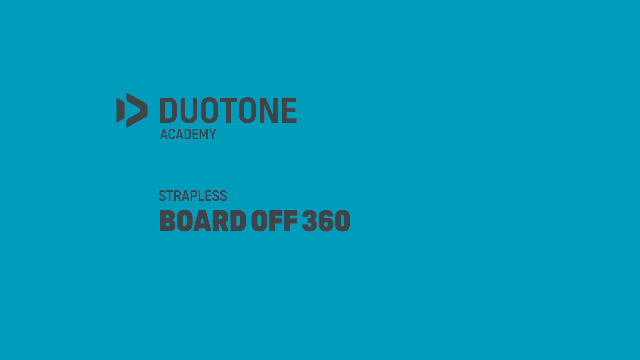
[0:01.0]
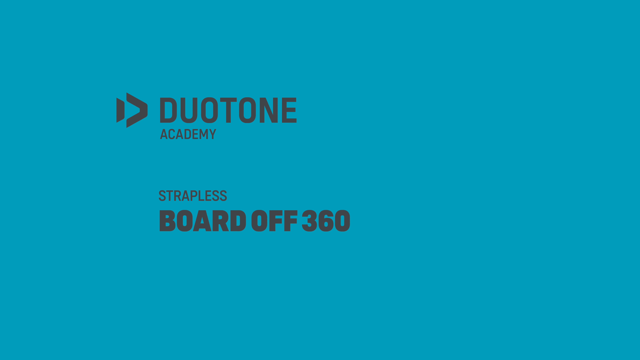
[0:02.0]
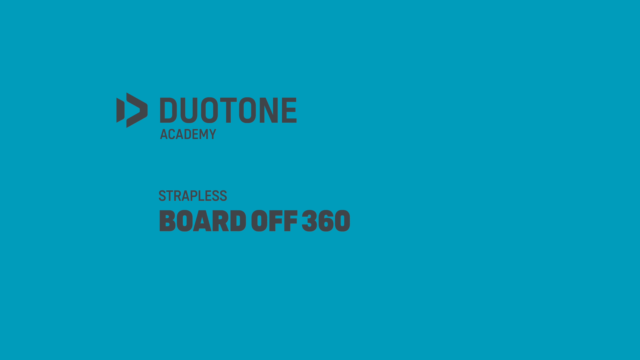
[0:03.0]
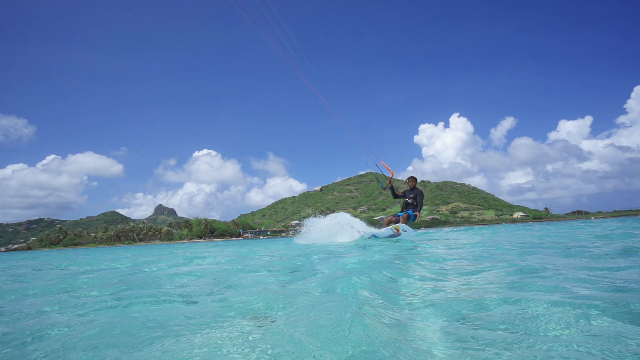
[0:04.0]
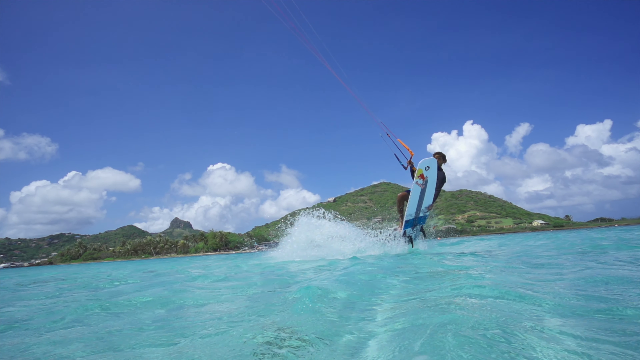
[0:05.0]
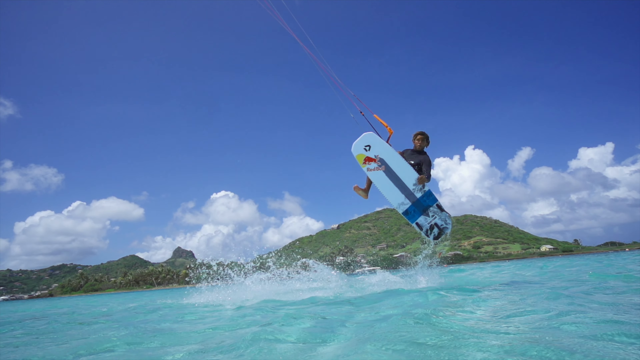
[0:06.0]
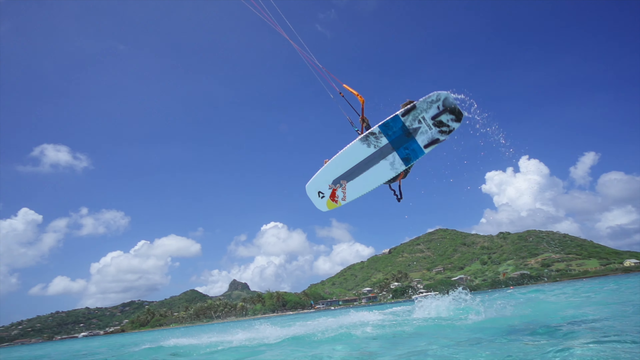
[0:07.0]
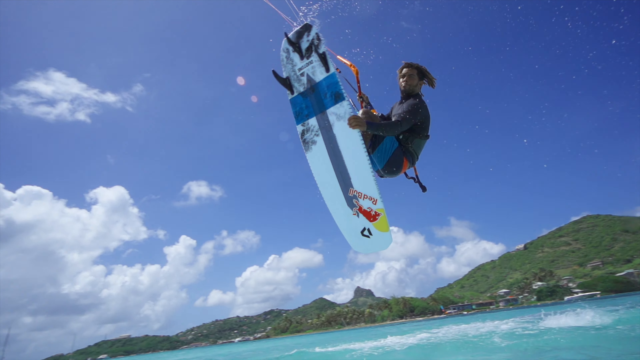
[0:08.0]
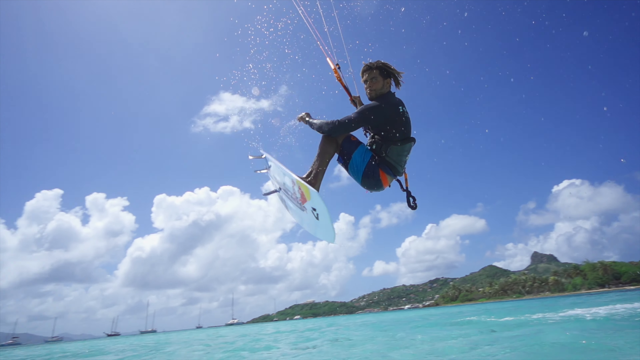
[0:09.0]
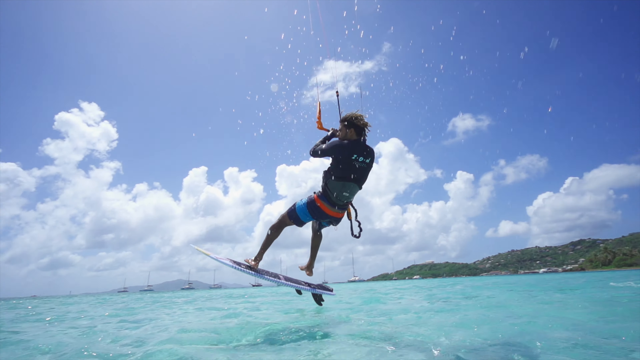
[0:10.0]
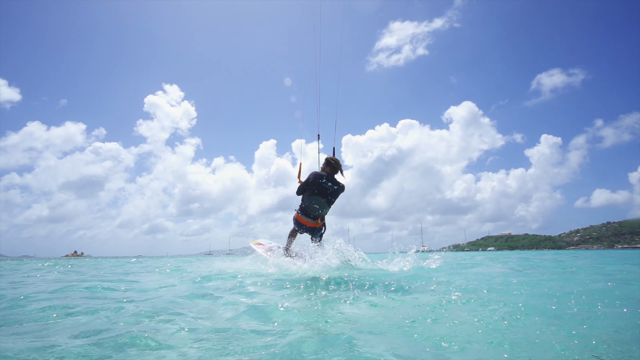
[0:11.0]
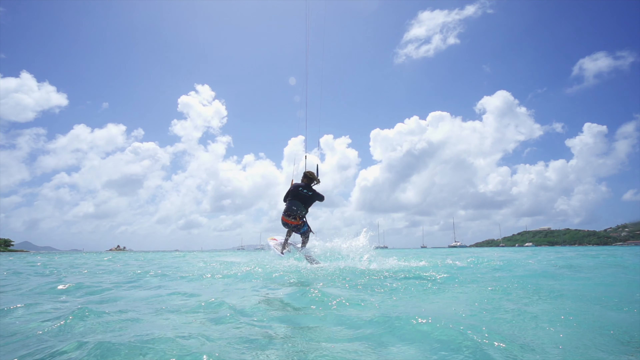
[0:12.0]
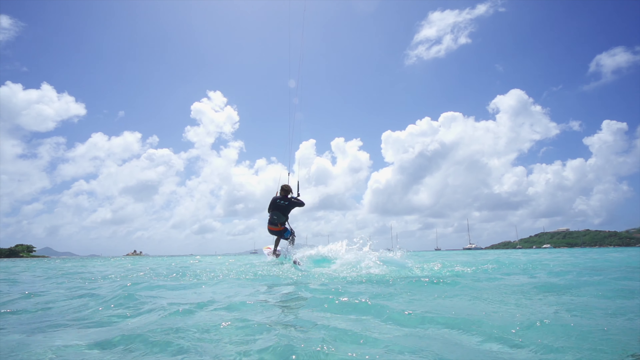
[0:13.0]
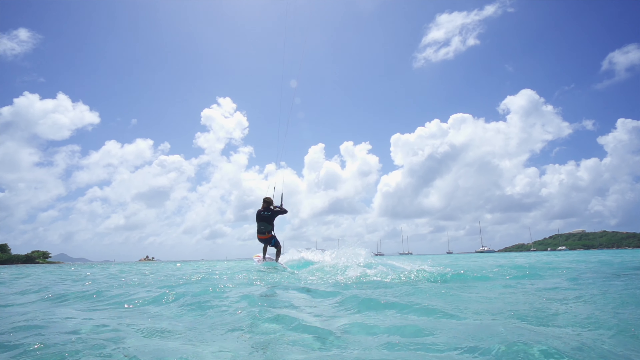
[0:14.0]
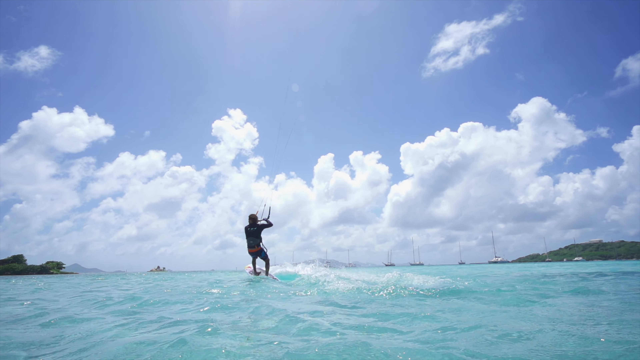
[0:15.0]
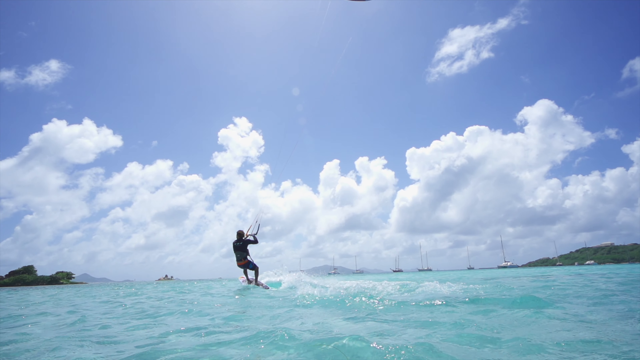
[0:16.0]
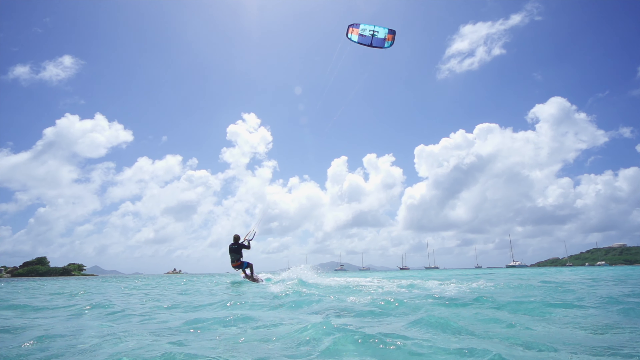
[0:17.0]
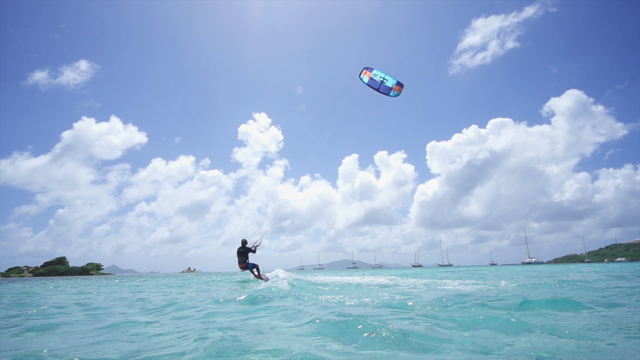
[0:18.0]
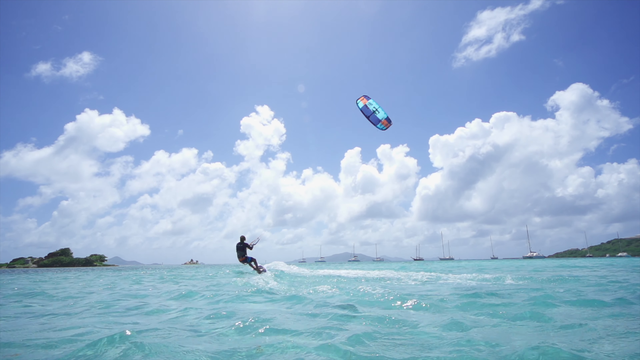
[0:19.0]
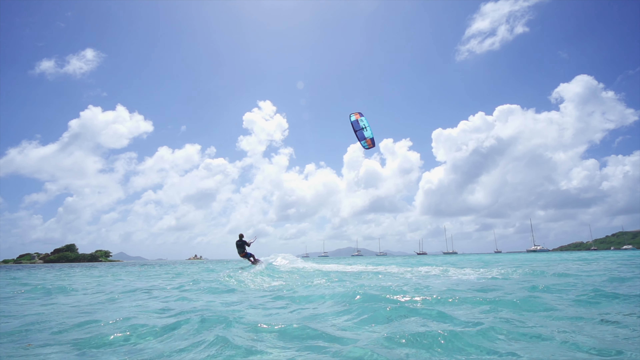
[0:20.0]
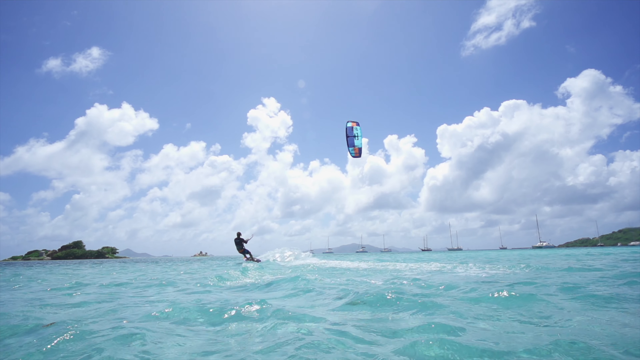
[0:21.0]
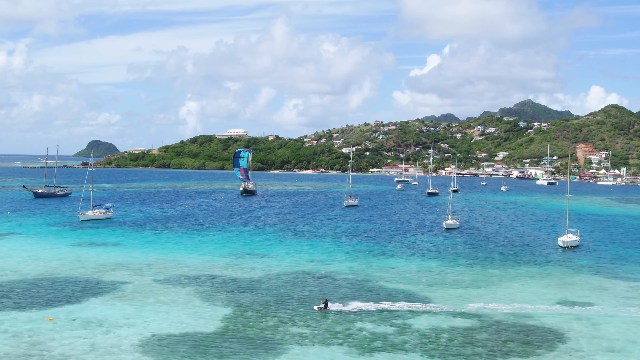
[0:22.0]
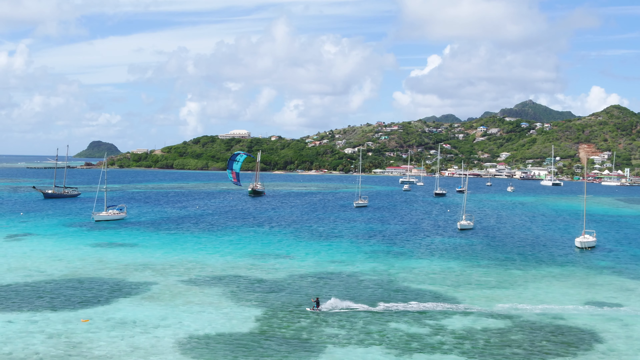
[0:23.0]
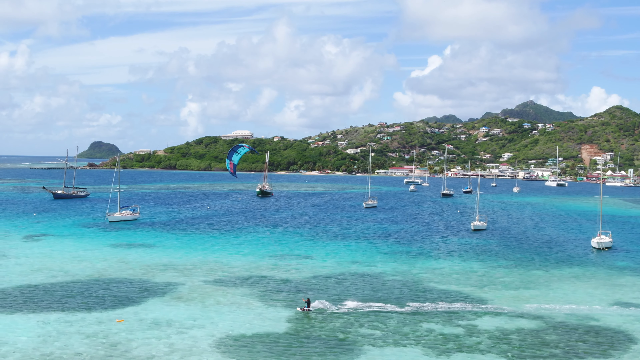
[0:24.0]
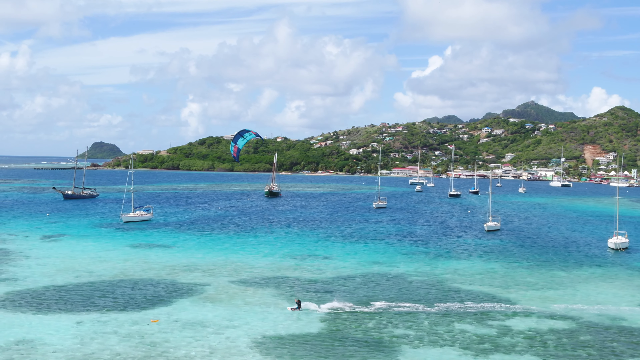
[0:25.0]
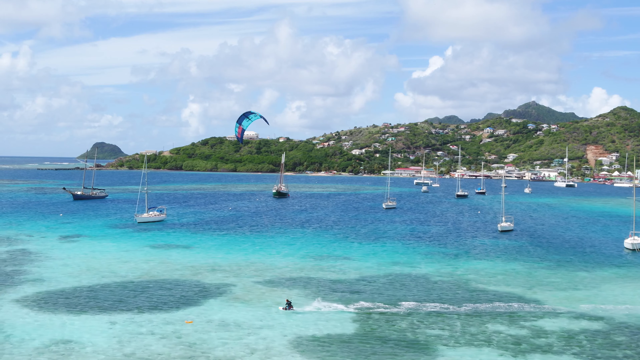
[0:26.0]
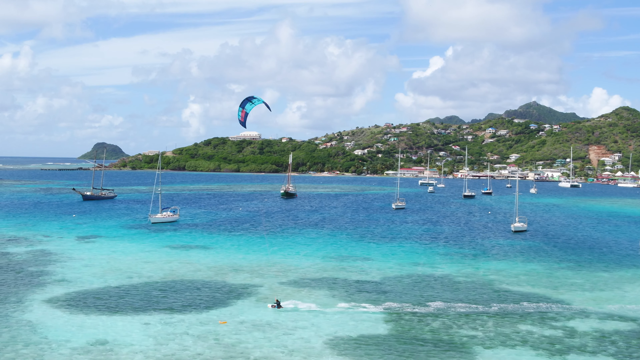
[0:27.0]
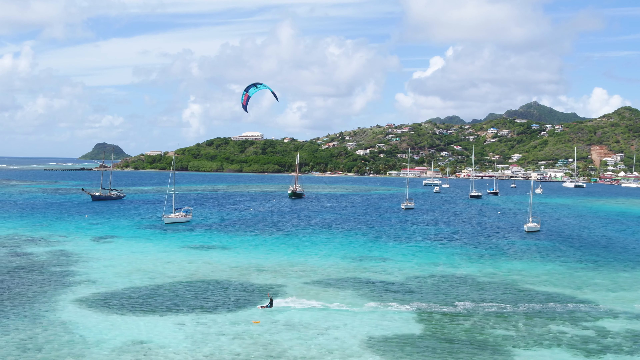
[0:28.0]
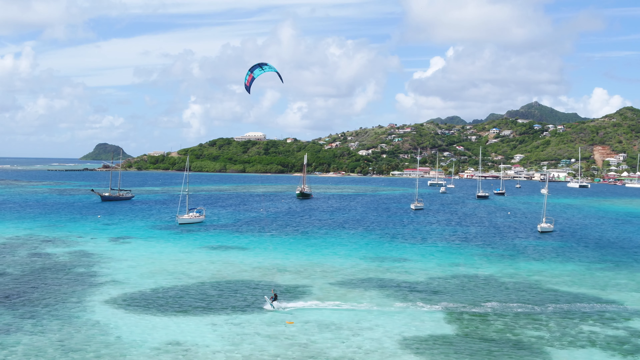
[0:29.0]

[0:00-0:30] The video opens on a greenish-blue background with the words "Duo Tone Academy strapless board off 360." The scene then changes to greenish-blue water. Behind the water is a small hilly area with green grass on top, with white puffy clouds and a clear blue sky above. A man is on a board, holding a bar attached to cables and a parachute. He lifts into the air and grips the side of the board as he looks at the viewer. His hair is long, in braids or dreadlocks. He wears a fitted black long-sleeve swim top and striped swim trunks: the stripe near his waist is orange or green, the next is navy blue, then a lighter baby blue, then another darker navy stripe. He lands in the water and glides across it for a few seconds. The scene then changes to a wider view of the water in which the attached parachute is visible, as well as at least six sailboats.